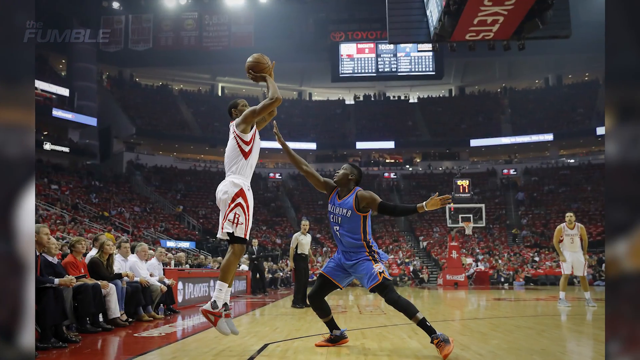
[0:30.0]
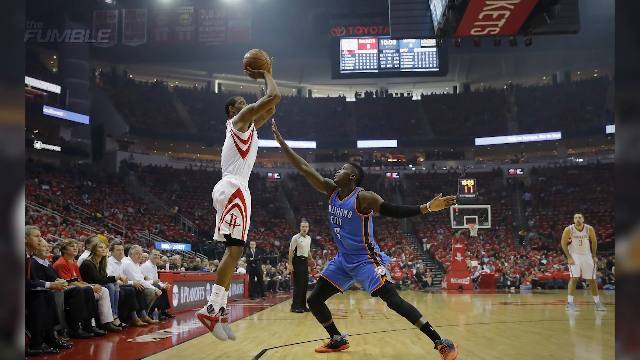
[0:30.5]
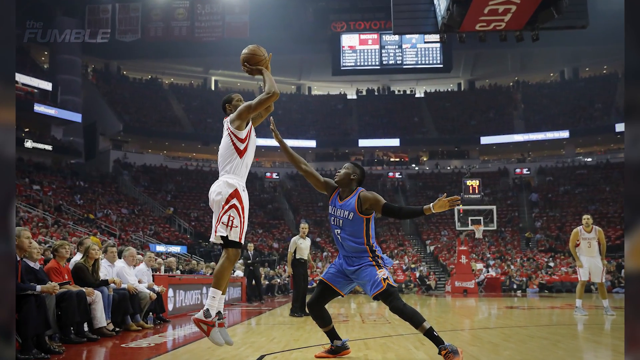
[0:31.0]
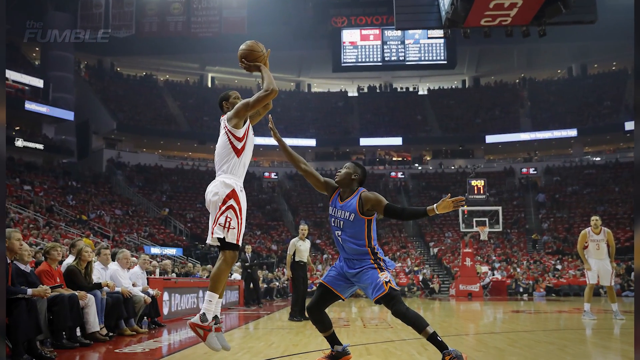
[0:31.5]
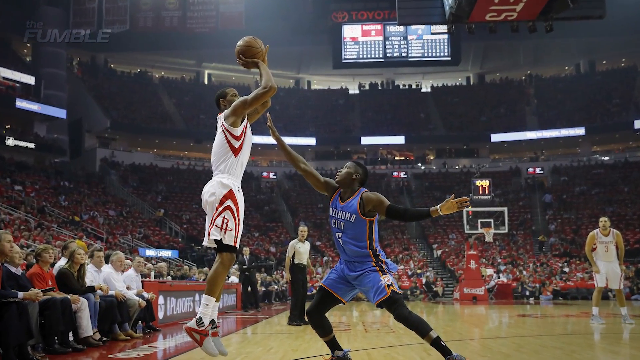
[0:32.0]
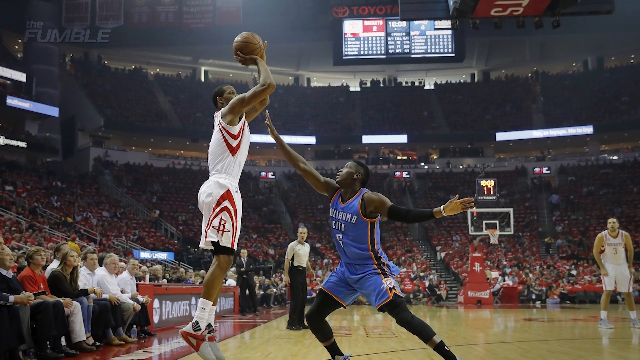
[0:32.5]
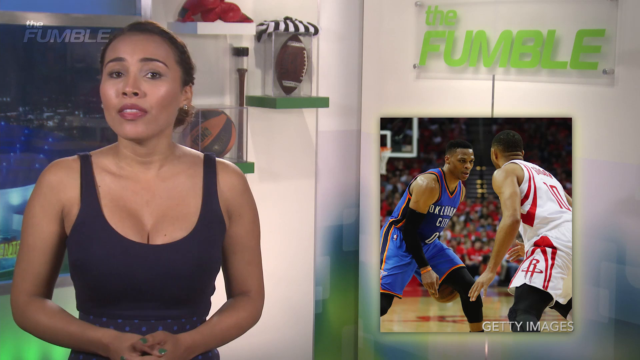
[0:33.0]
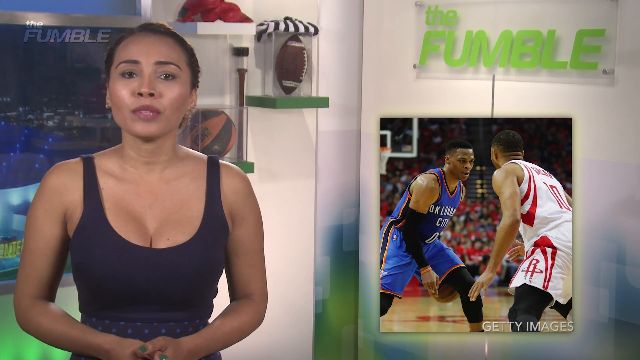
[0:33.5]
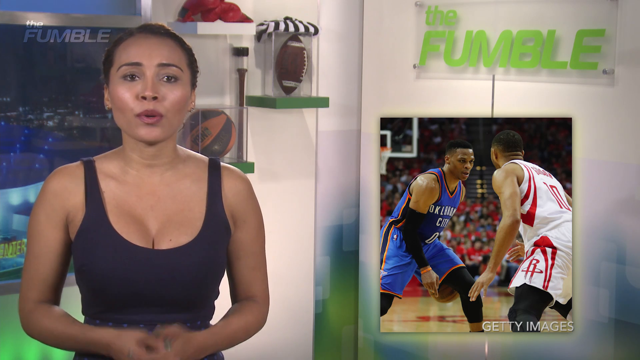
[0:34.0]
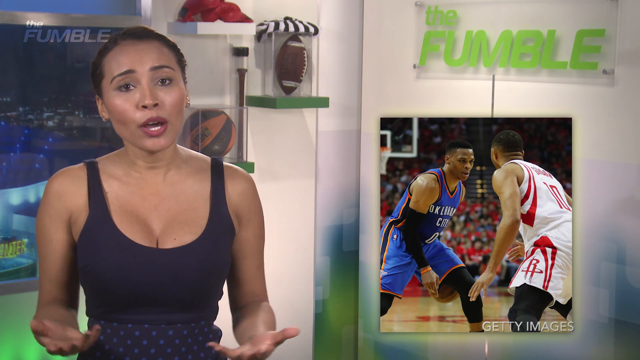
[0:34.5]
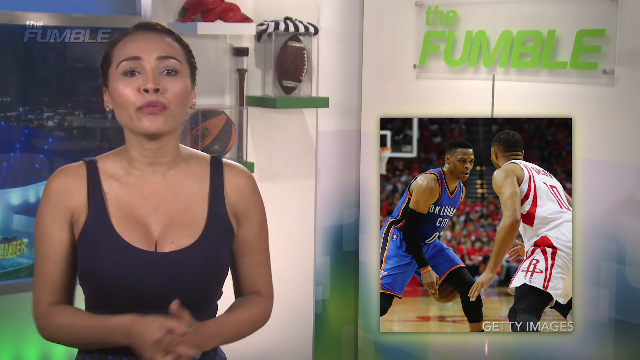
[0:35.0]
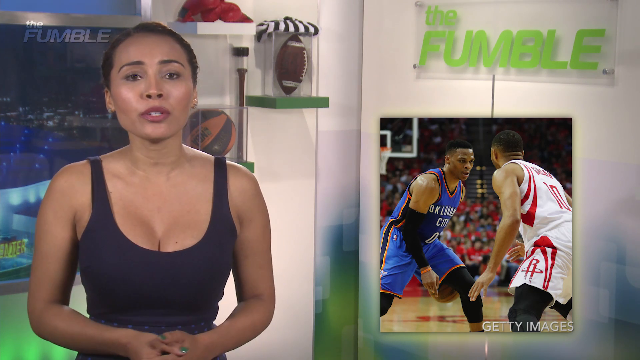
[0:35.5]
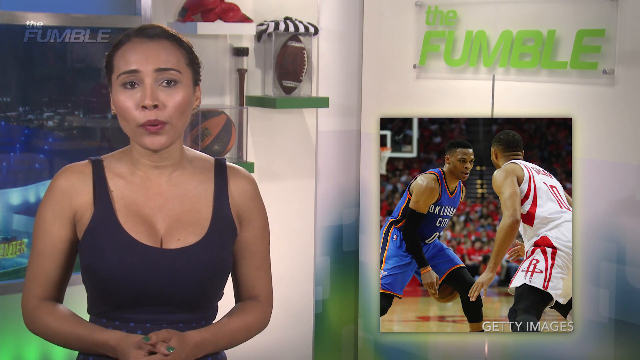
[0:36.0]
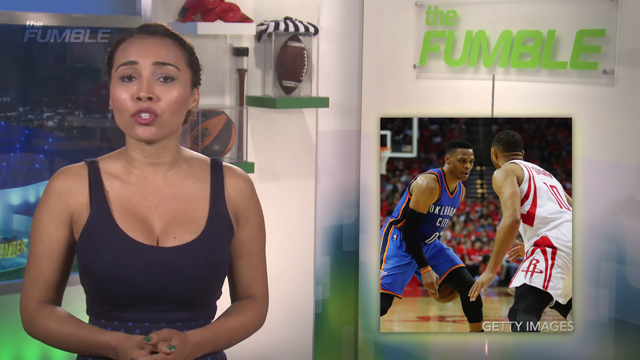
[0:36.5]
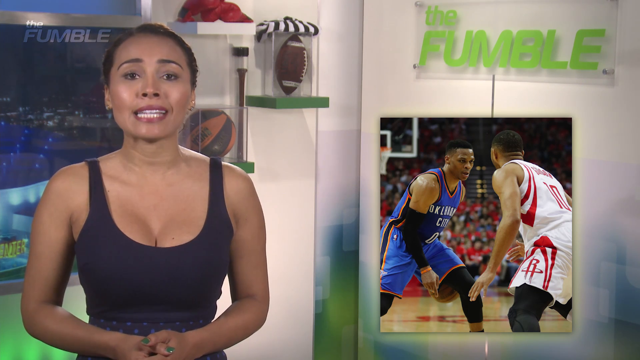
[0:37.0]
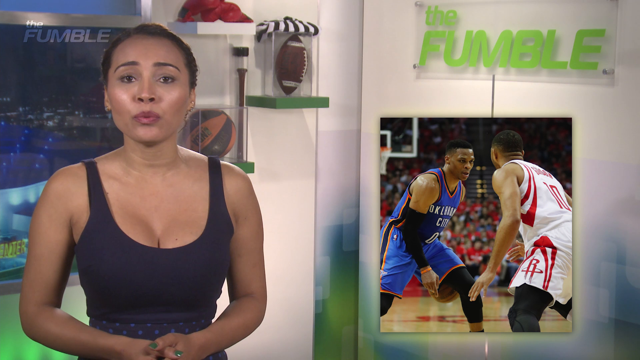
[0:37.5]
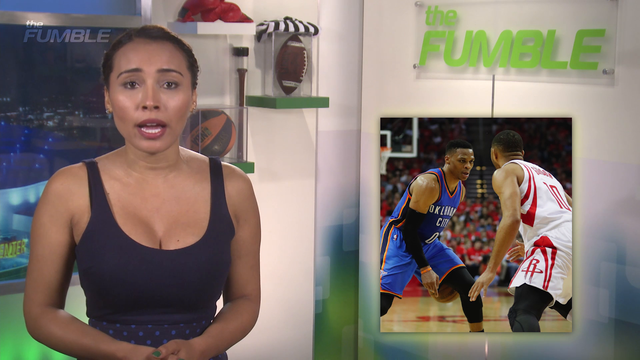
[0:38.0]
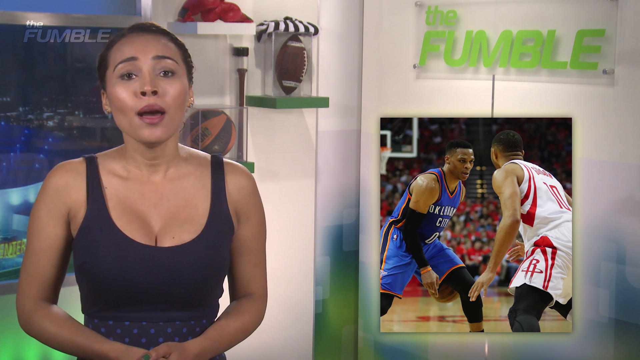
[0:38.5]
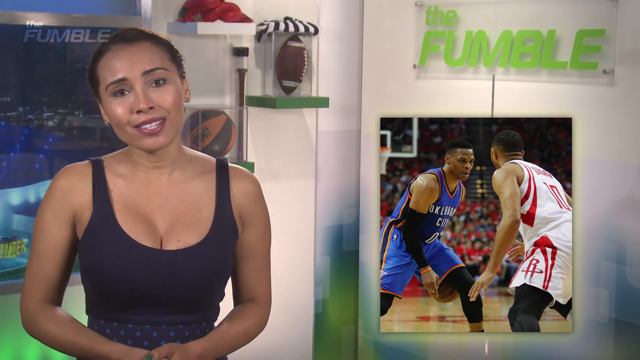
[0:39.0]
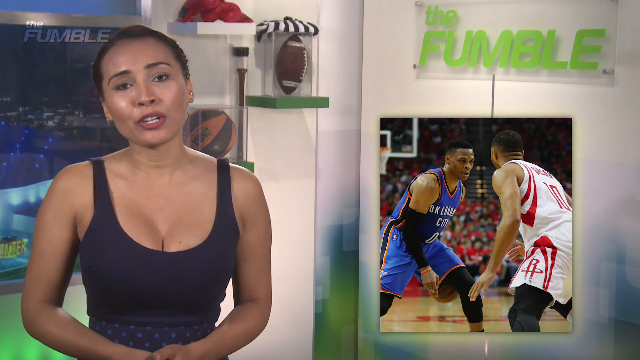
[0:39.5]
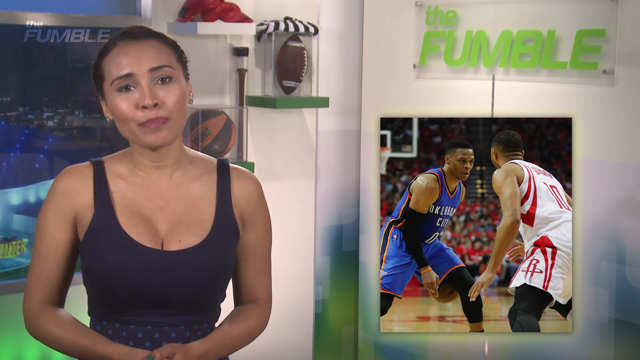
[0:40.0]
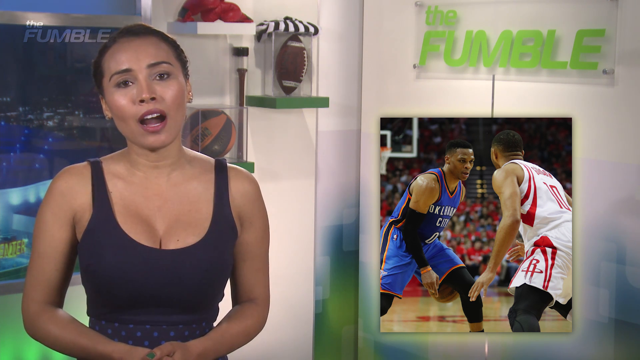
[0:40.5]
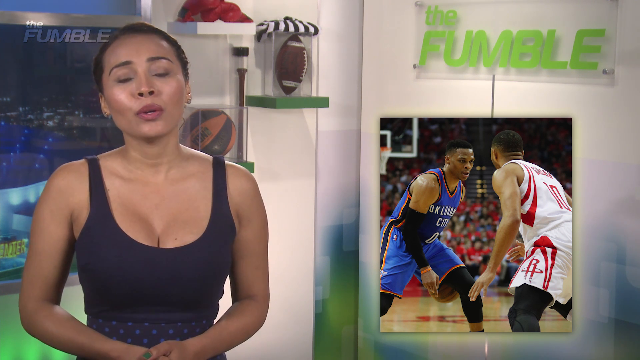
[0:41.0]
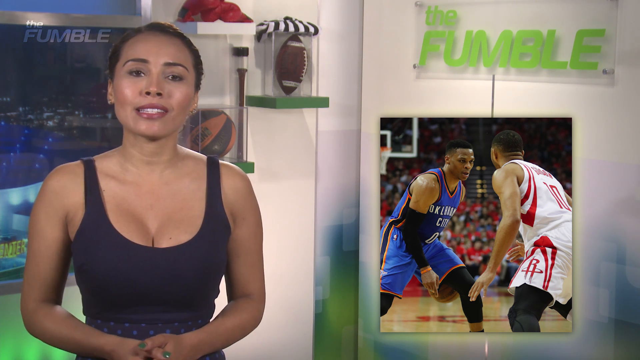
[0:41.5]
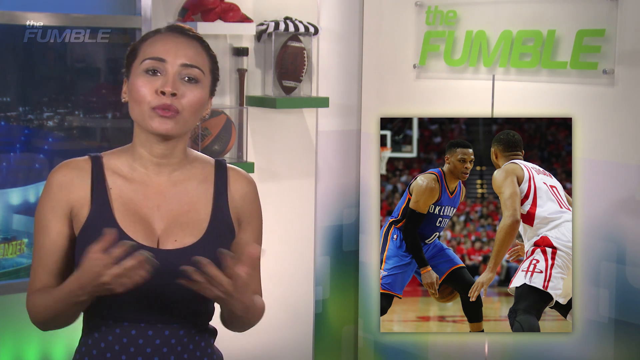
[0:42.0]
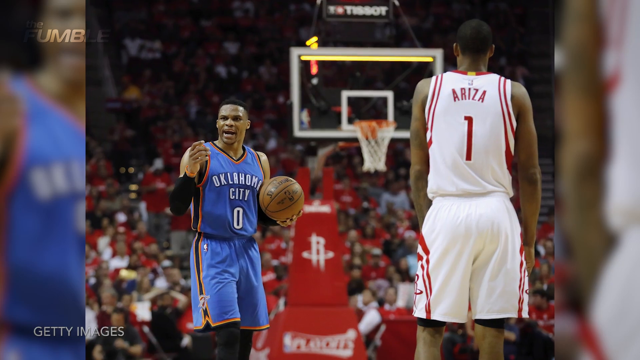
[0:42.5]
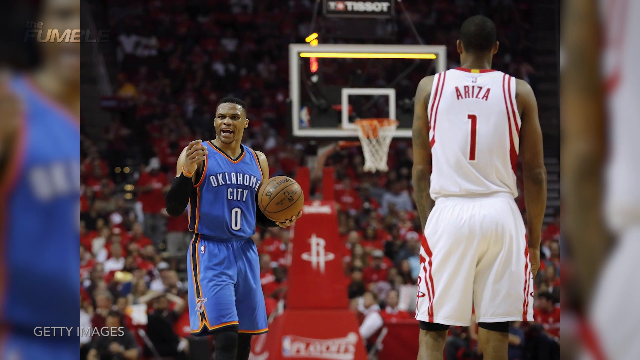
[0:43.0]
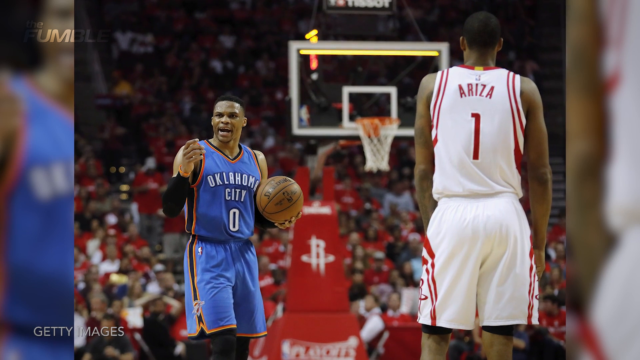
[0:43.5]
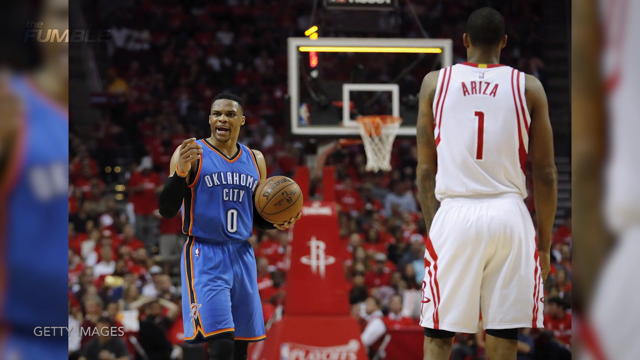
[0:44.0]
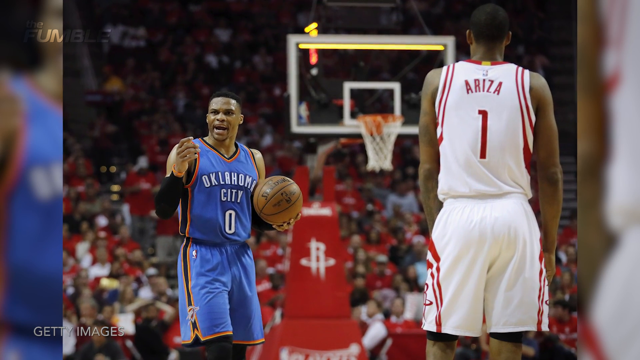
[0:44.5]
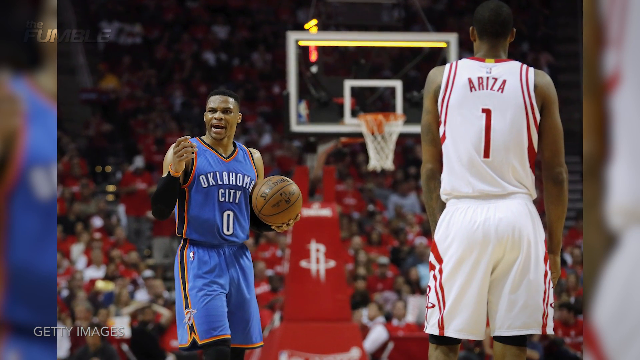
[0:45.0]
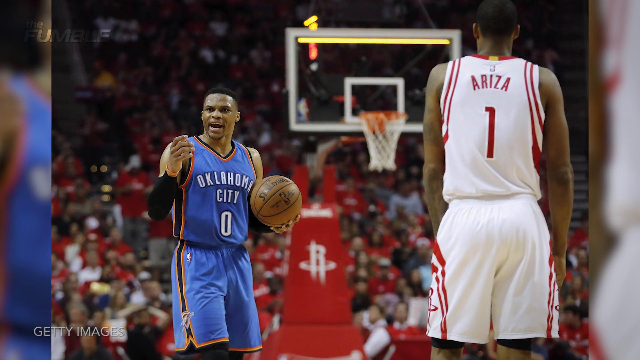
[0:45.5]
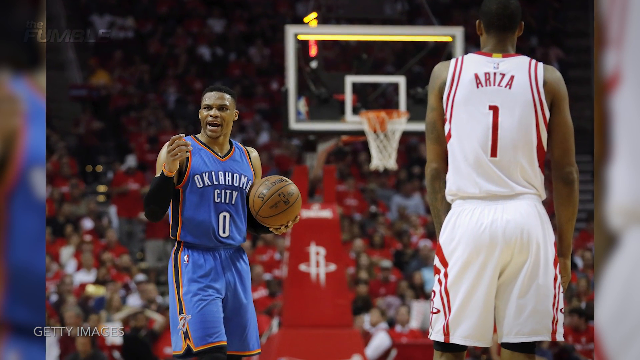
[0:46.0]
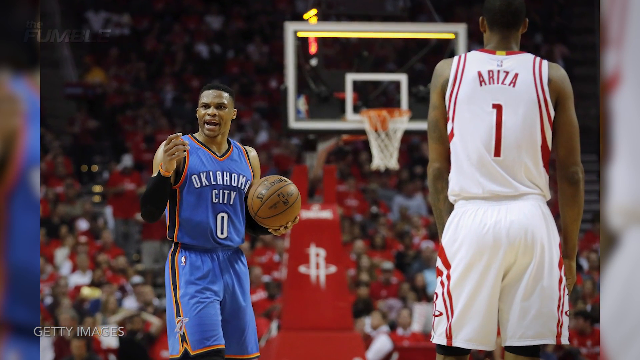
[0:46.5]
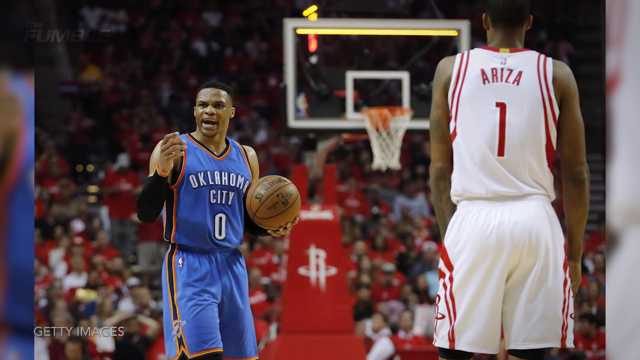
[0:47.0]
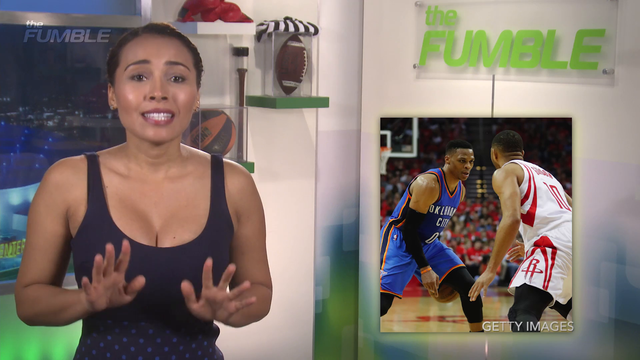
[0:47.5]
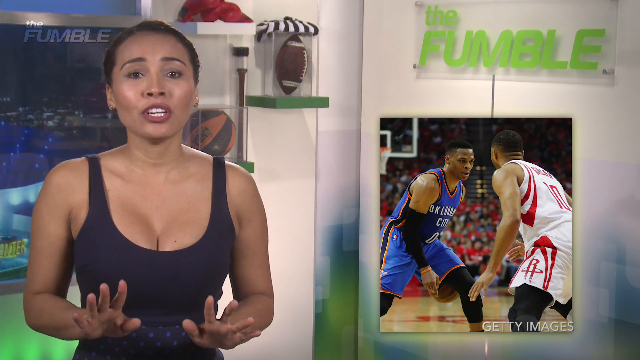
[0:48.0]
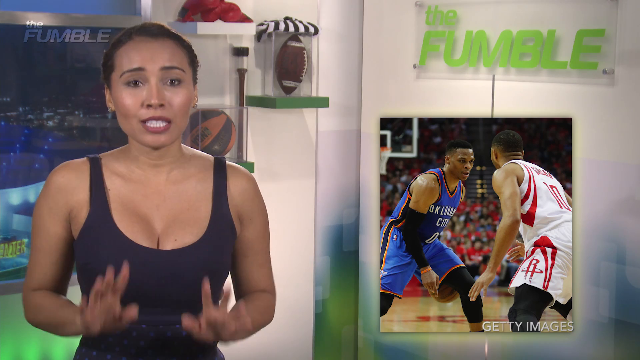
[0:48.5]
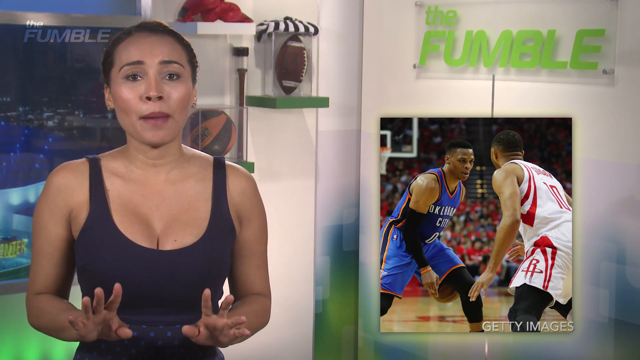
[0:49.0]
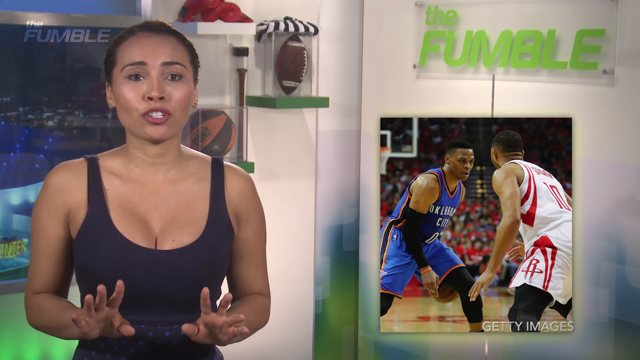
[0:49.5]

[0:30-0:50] The woman presenter talks a lot, apparently highlighting Oklahoma City's number 0 as an essential player for his team. At the beginning, a Rockets player is shown trying to score. The name of the channel, the funnel, is also visible.